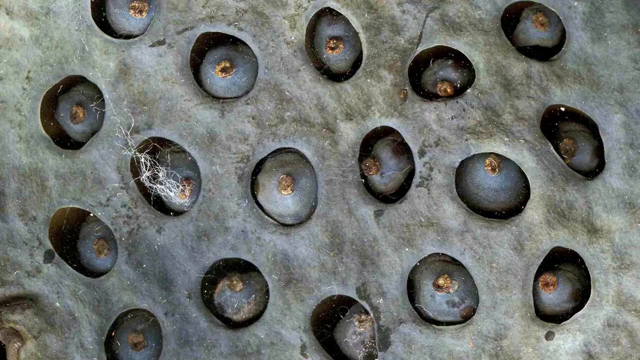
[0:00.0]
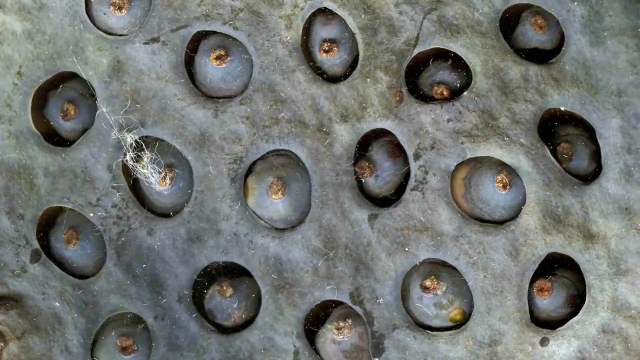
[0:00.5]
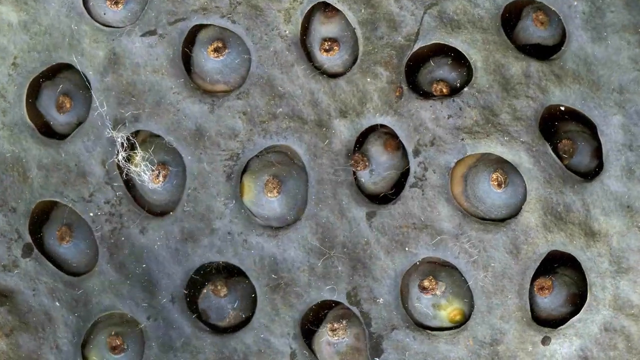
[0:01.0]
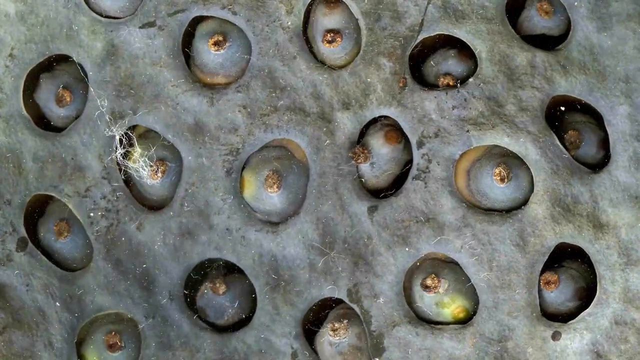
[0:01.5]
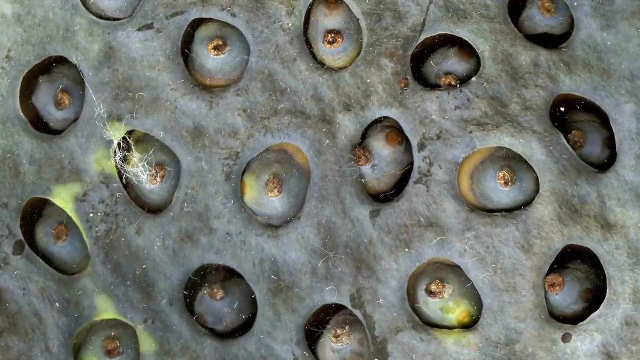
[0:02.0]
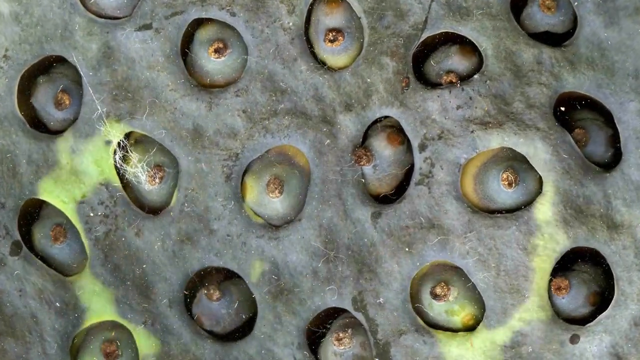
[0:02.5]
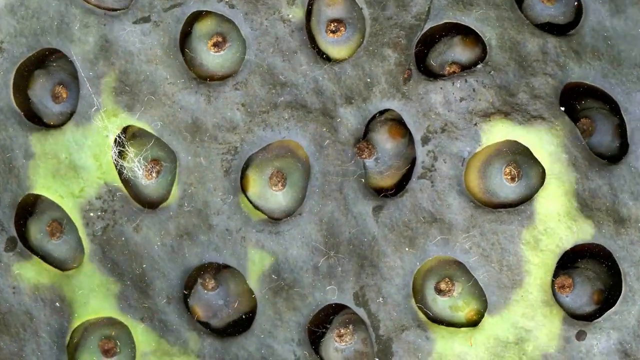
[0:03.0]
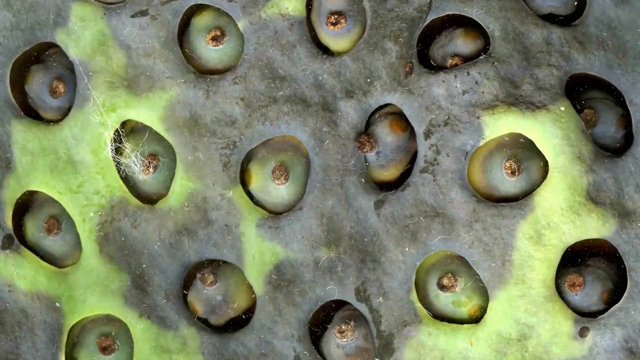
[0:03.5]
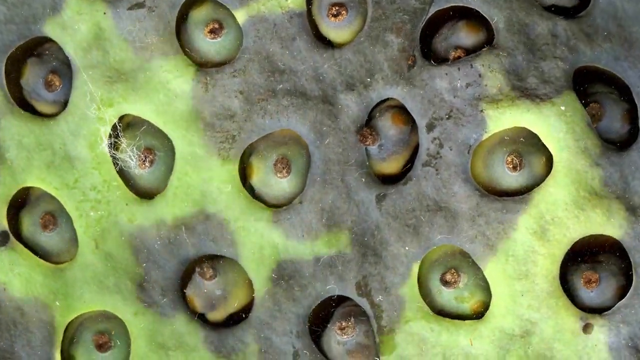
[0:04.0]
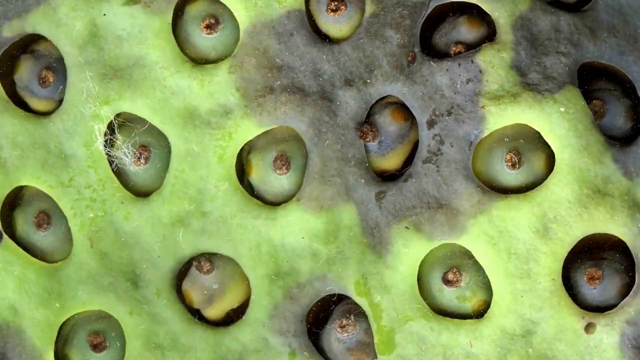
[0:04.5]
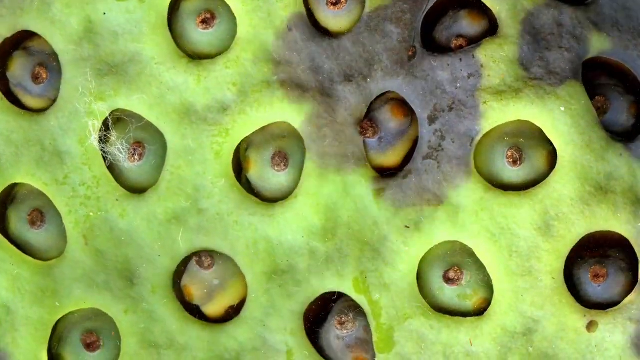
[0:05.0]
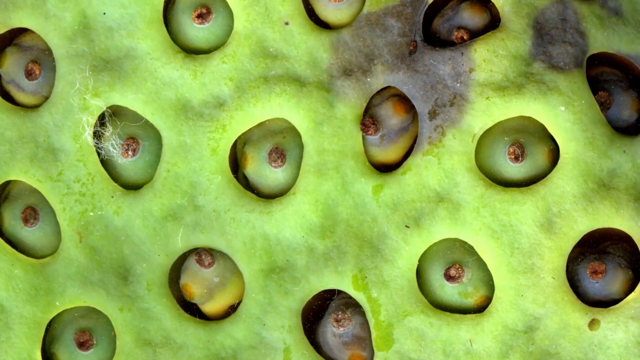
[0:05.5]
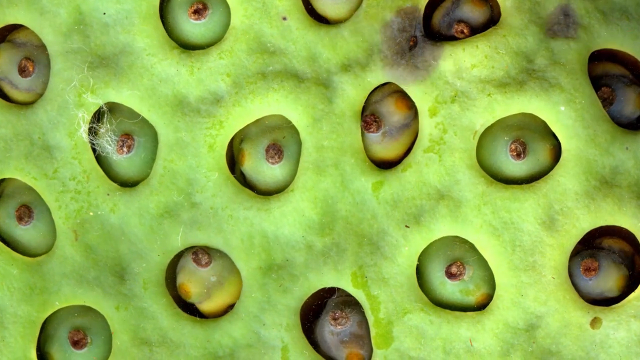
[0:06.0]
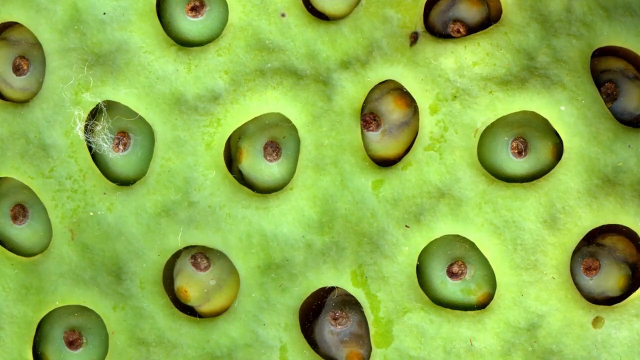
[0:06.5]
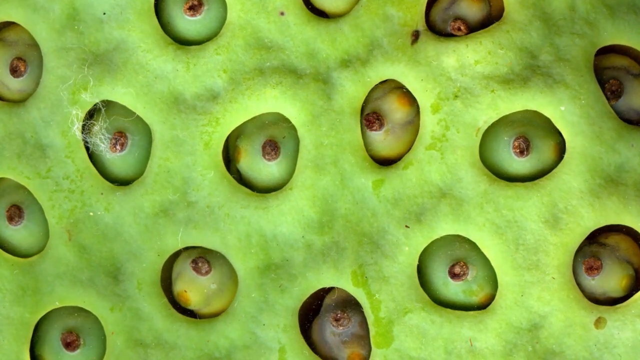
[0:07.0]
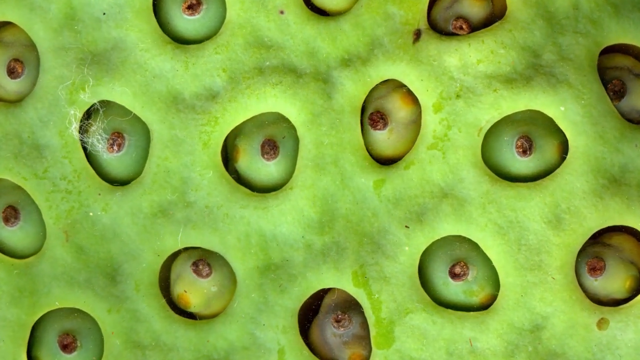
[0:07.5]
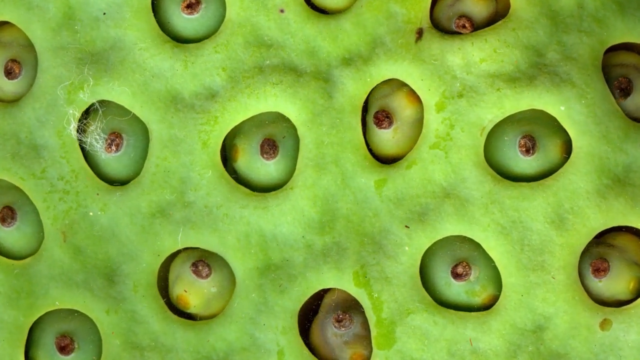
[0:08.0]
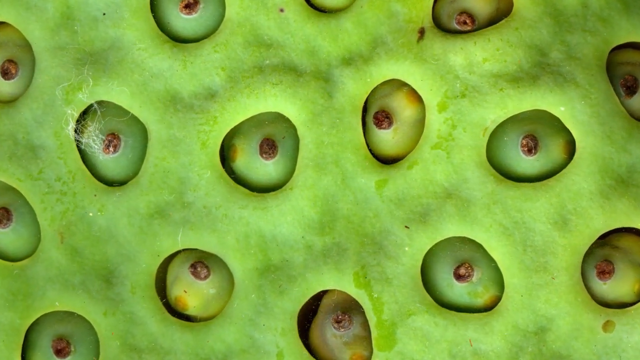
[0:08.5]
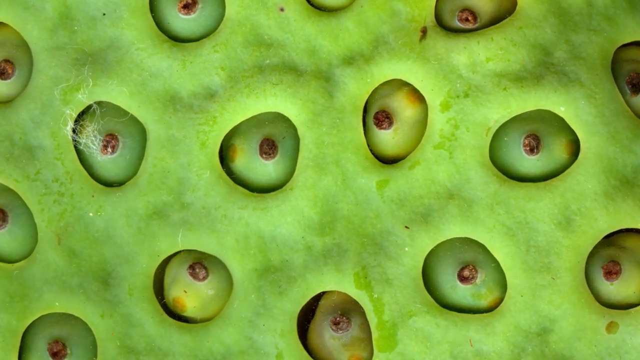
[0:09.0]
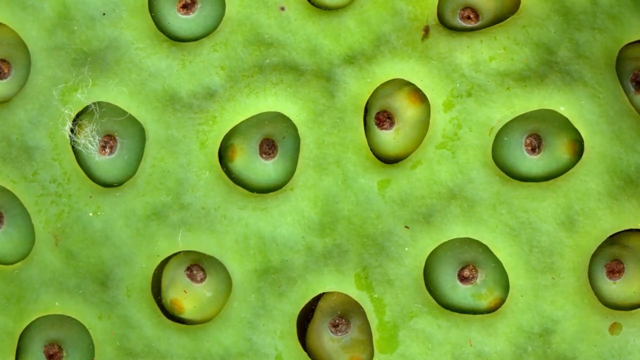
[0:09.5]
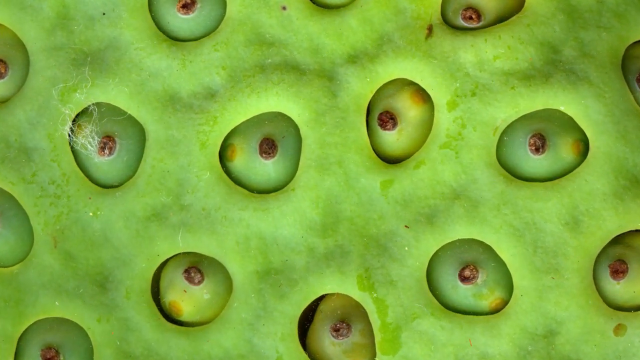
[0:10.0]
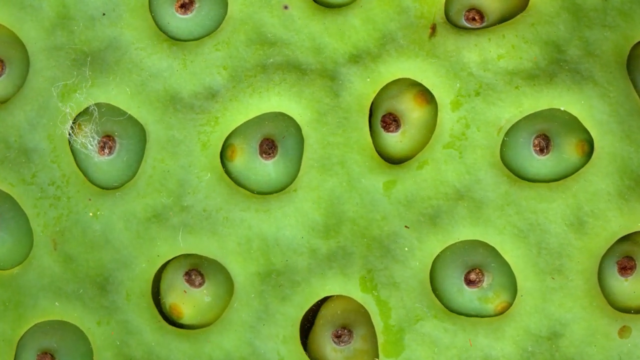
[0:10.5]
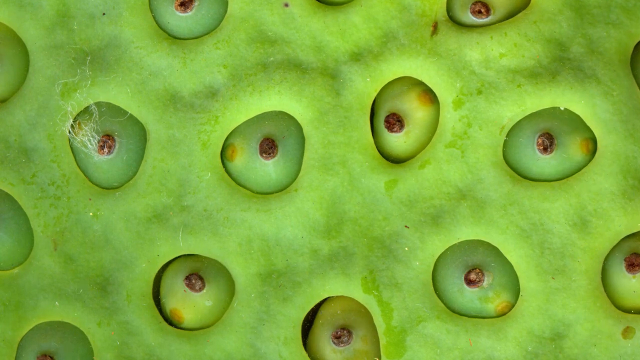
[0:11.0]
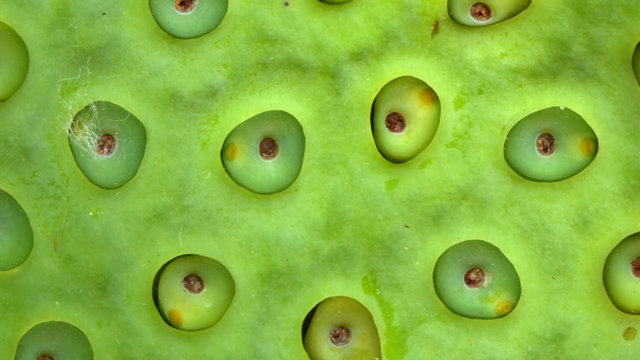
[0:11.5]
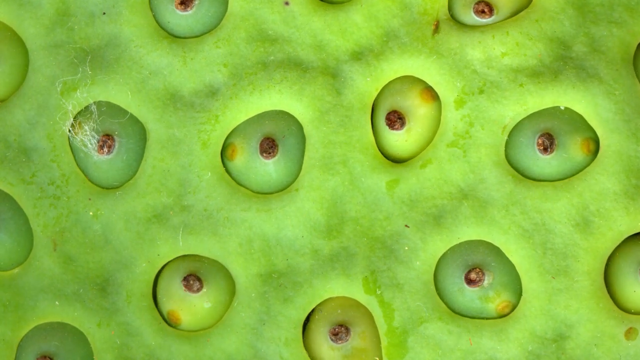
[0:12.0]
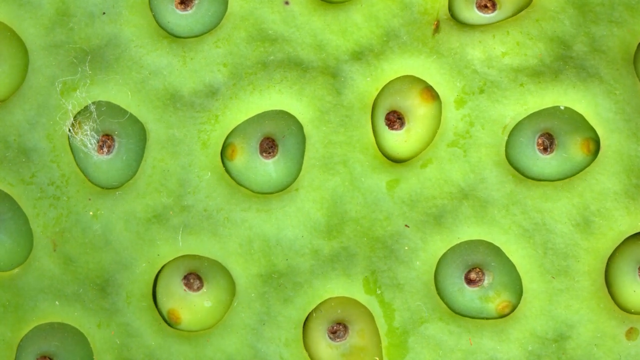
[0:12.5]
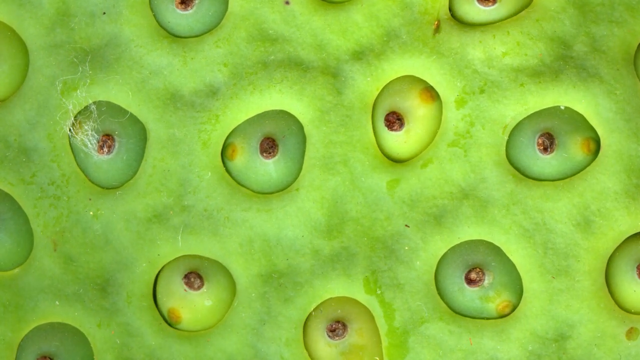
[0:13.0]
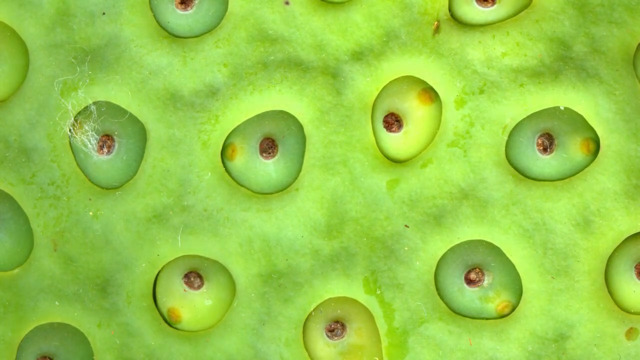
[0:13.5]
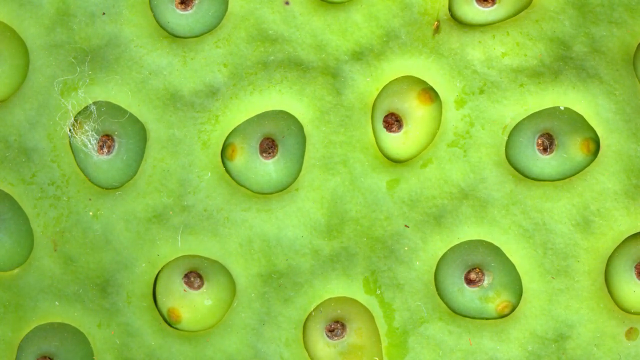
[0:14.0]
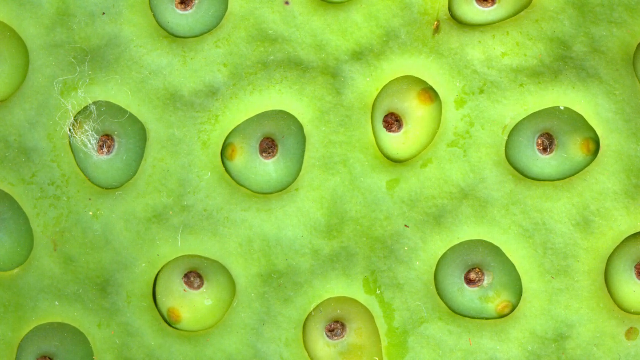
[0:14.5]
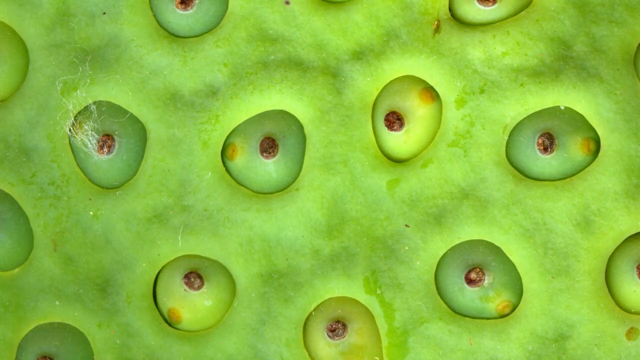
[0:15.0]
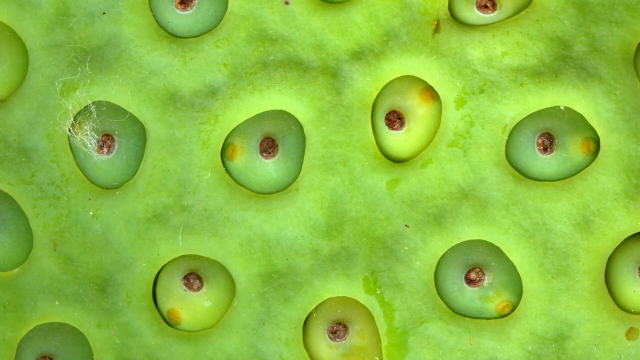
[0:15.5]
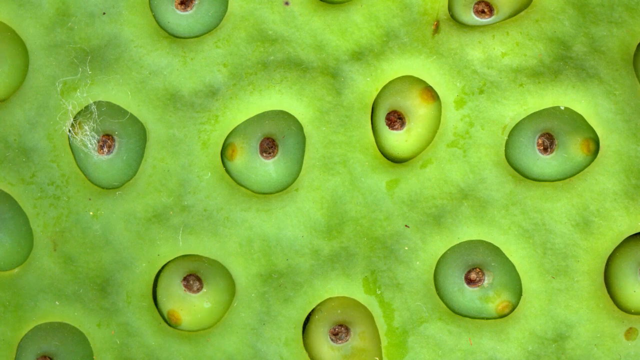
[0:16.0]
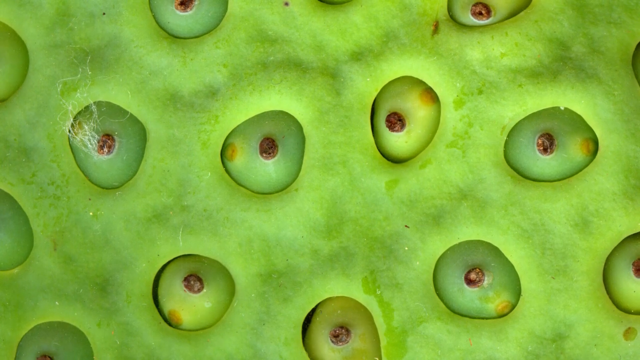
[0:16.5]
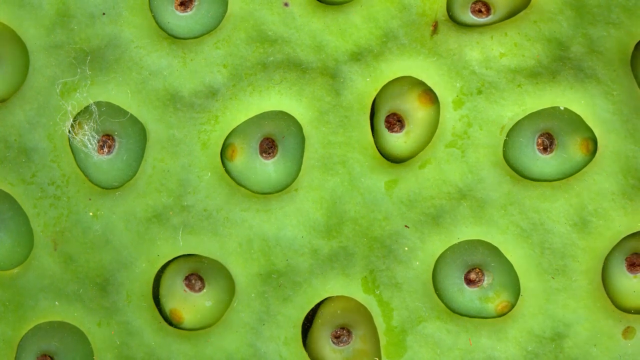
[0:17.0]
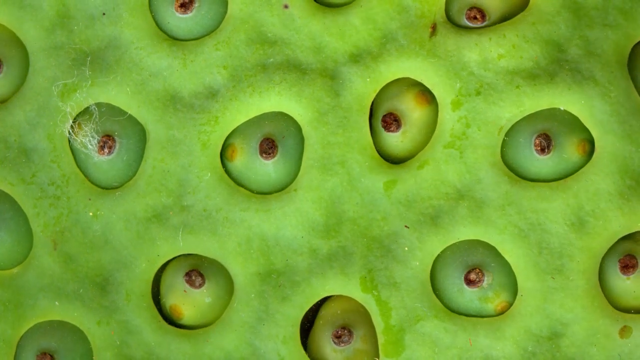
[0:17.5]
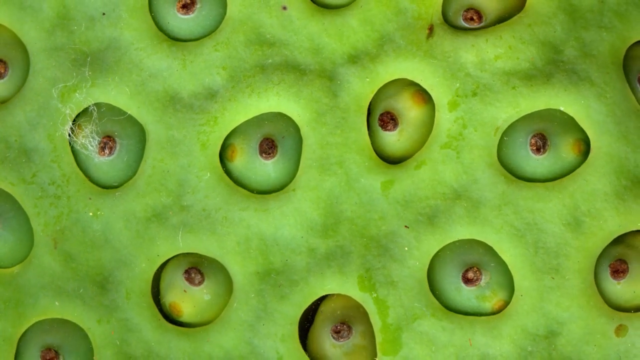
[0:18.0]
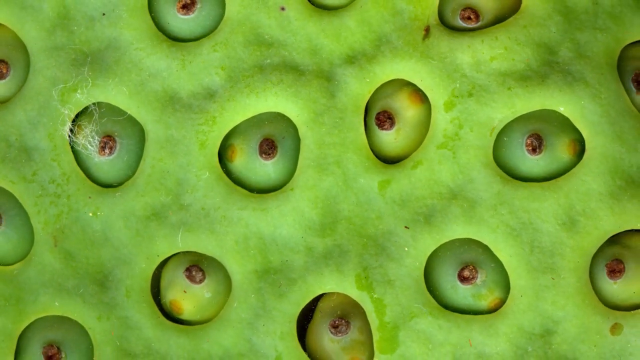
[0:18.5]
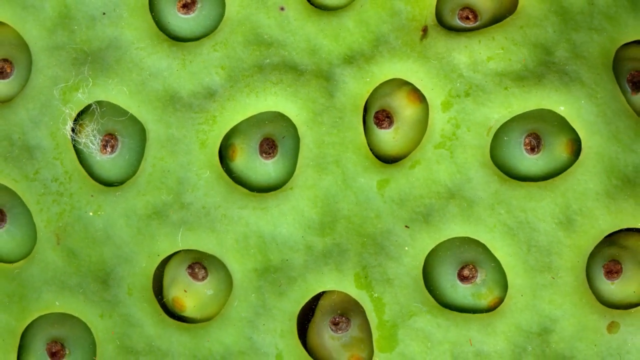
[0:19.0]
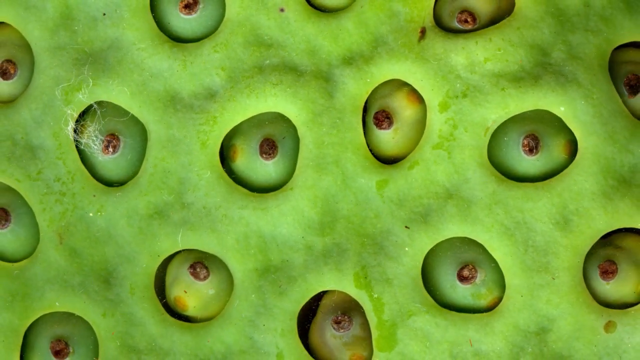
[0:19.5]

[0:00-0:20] An image shows what appear to be berries, or possibly seeds, inside some sort of fleshy container. The berries are dark blue, almost black, and each has a small crown of sort of brown leaves. They are behind what seems to be some sort of fleshy skin, which is grey, roughly the colour of stone. One berry has a sort of furry white end; the rest do not appear to have flowers or anything similar on them yet. As the video goes on, the skin moves and the dark skin turns green, and the berries appear to turn green as well. They are possibly seeds, still clearly behind the holes in the skin. As they turn green they become a bit more green and a bit more brown, and they sort of toughen up and flesh out, and then eventually everything starts to retract again.